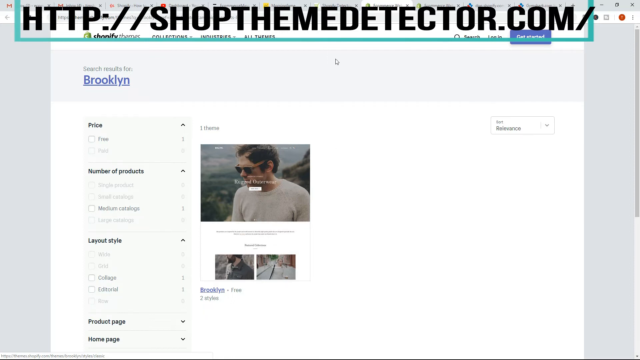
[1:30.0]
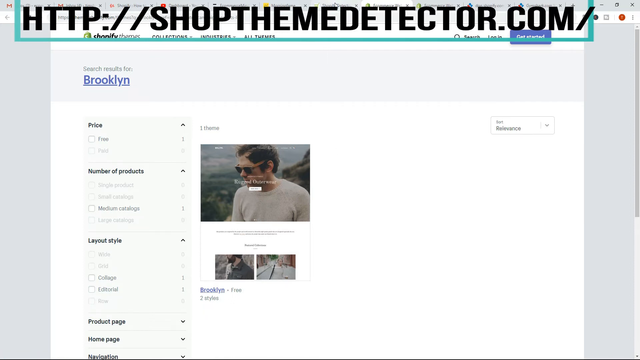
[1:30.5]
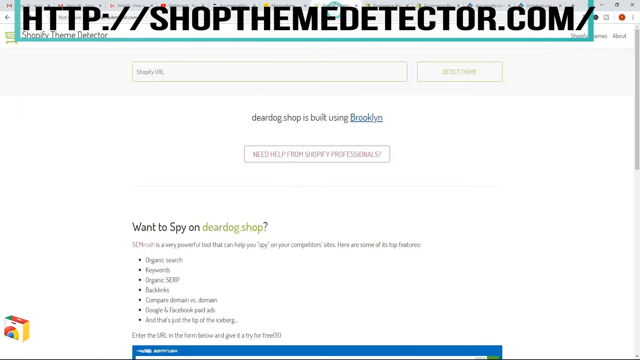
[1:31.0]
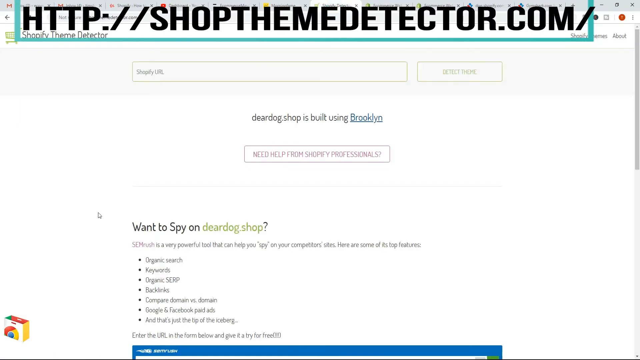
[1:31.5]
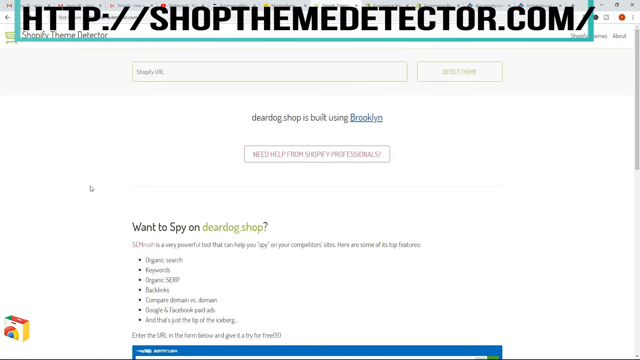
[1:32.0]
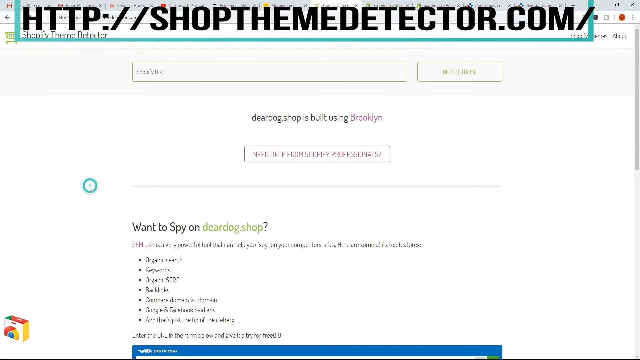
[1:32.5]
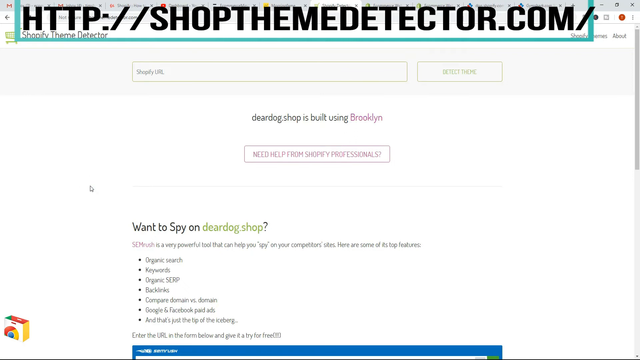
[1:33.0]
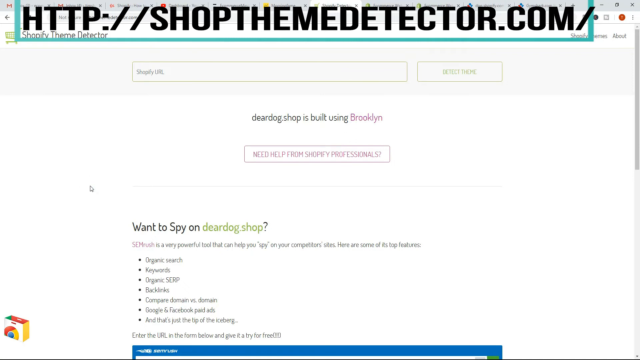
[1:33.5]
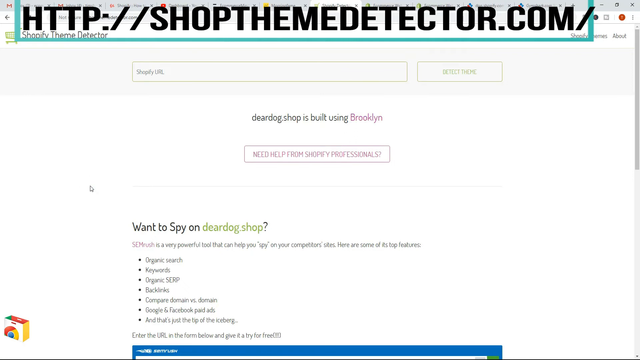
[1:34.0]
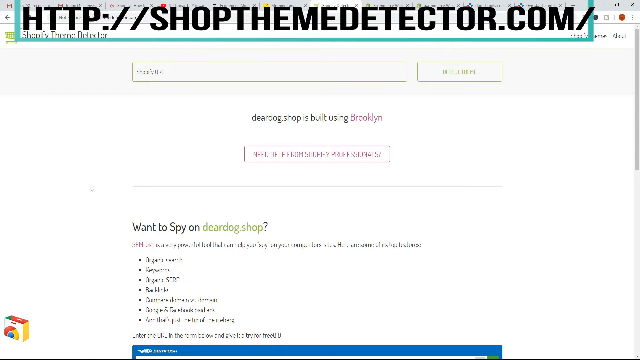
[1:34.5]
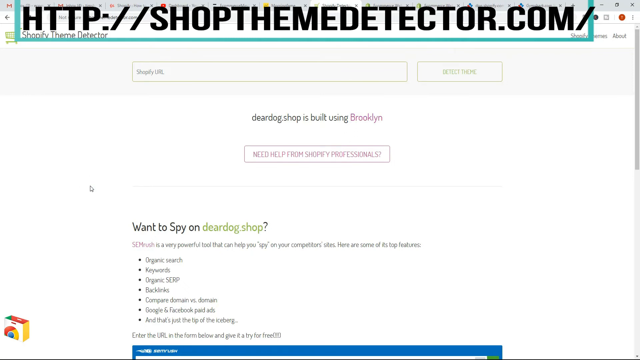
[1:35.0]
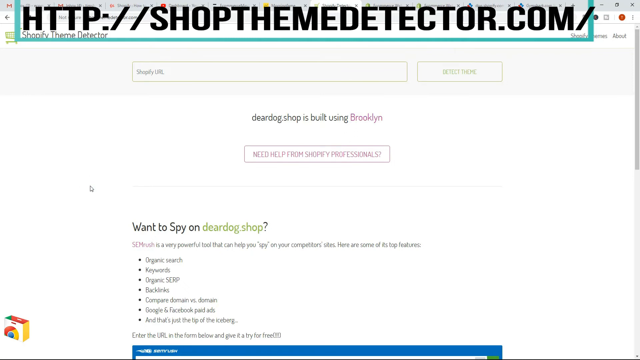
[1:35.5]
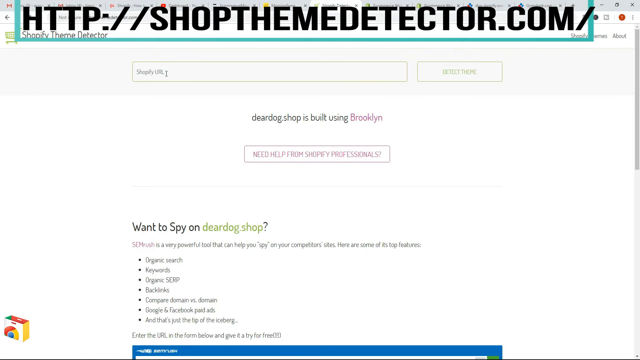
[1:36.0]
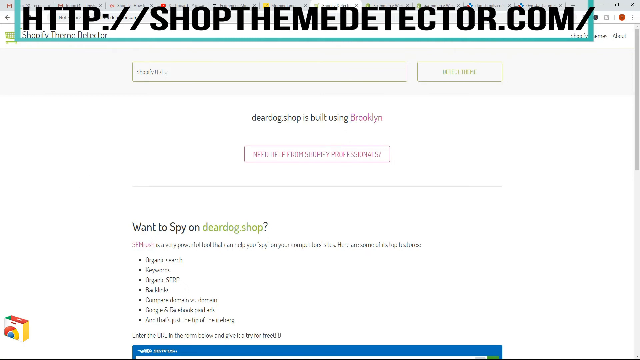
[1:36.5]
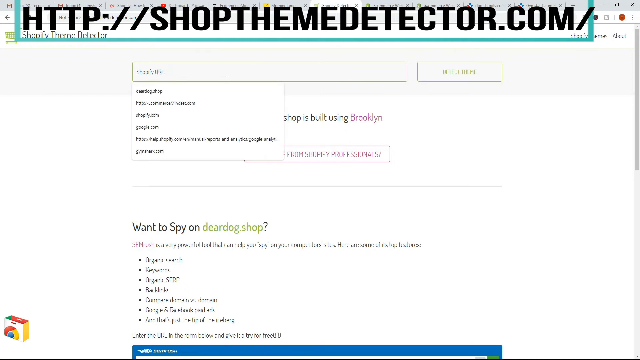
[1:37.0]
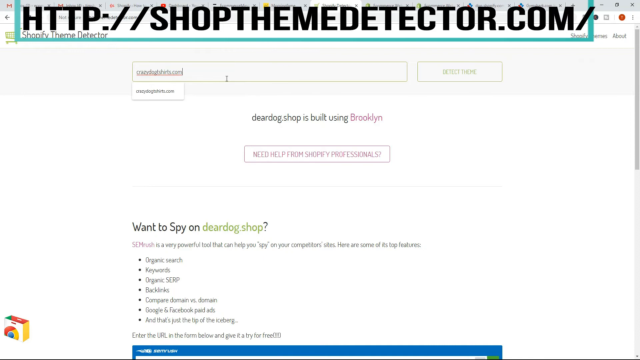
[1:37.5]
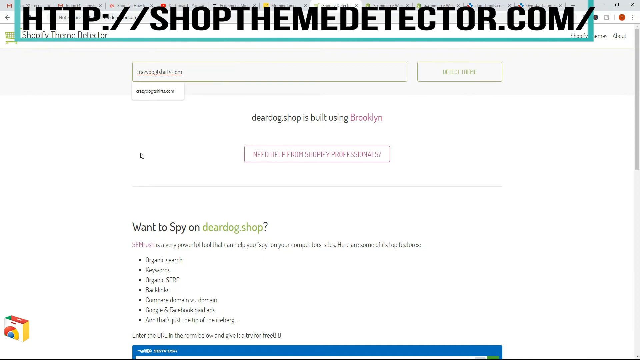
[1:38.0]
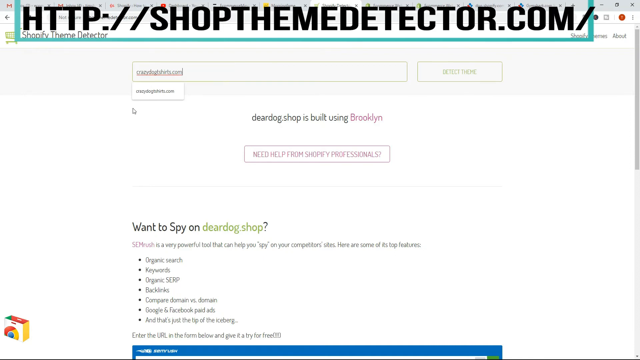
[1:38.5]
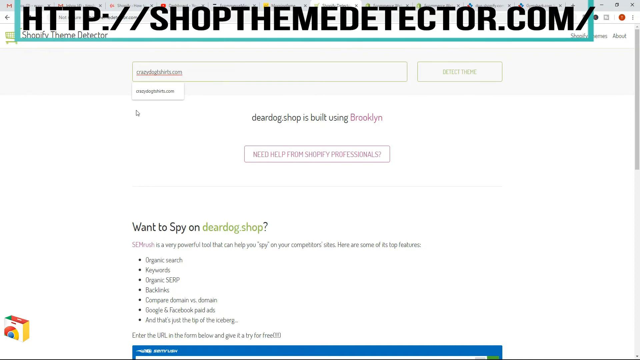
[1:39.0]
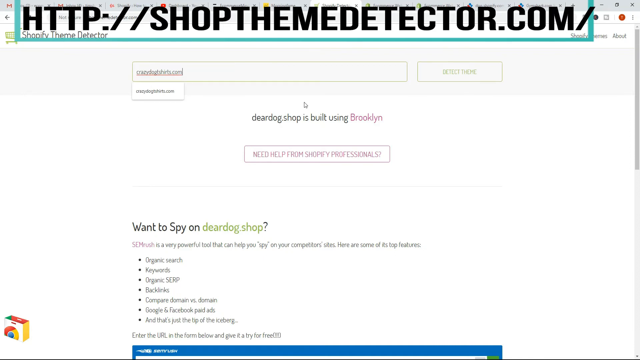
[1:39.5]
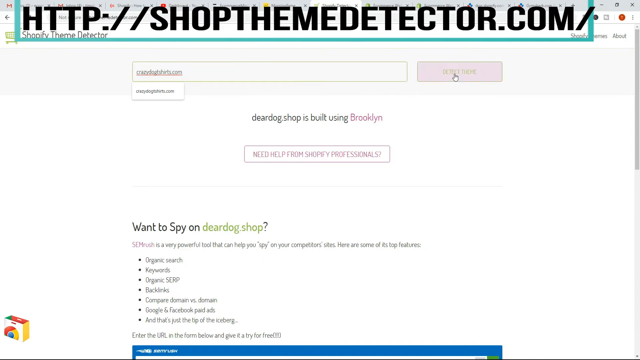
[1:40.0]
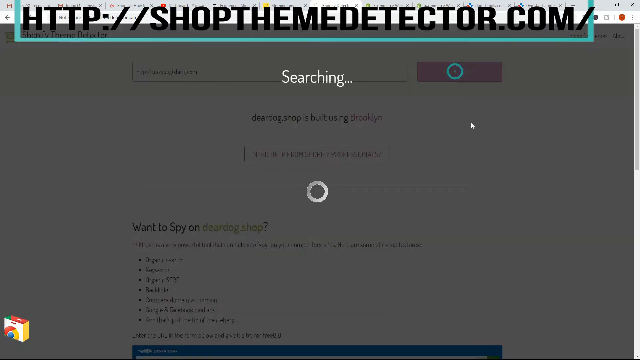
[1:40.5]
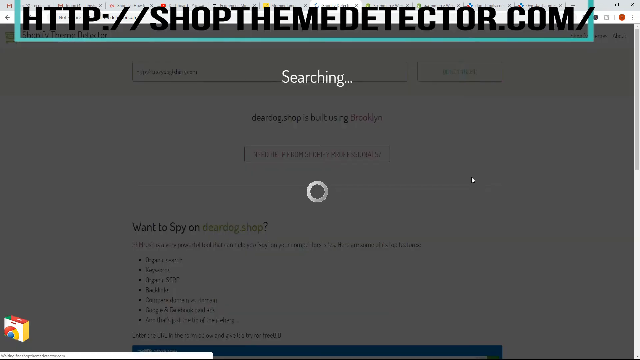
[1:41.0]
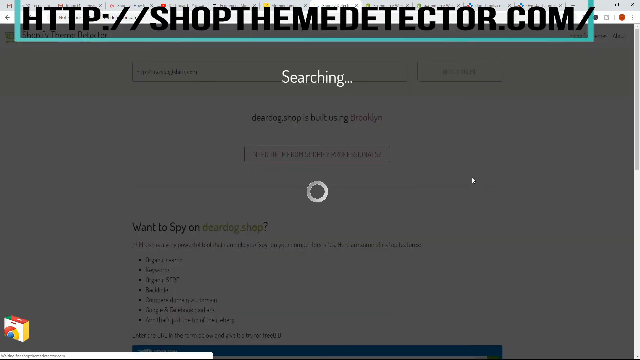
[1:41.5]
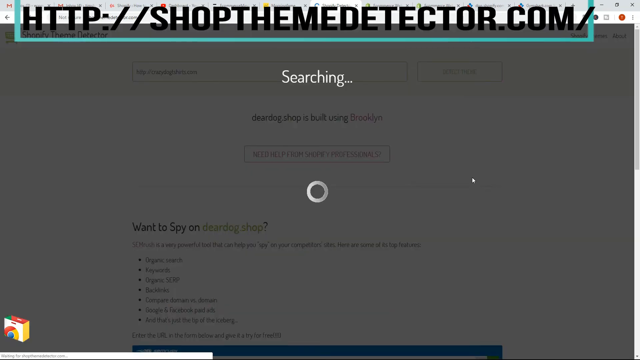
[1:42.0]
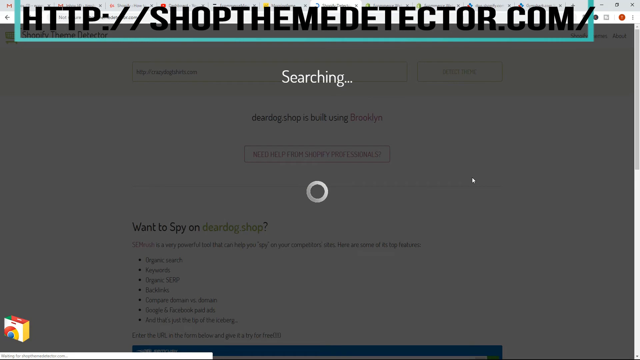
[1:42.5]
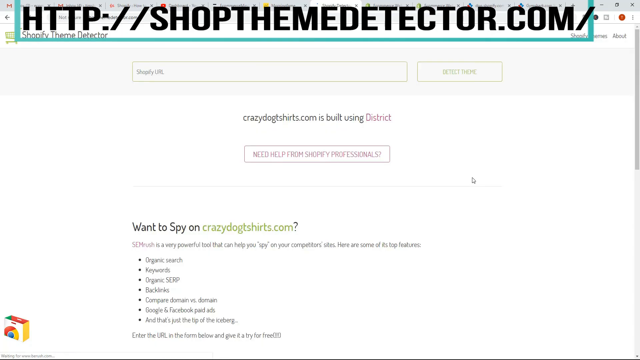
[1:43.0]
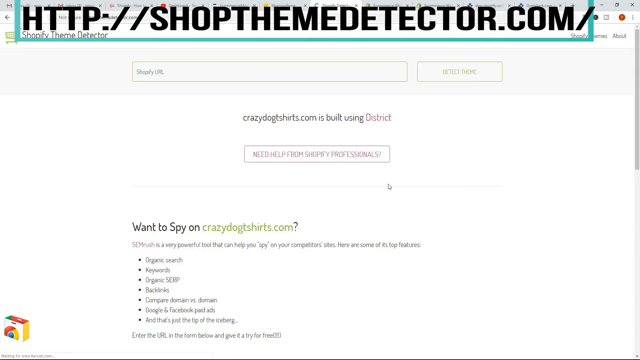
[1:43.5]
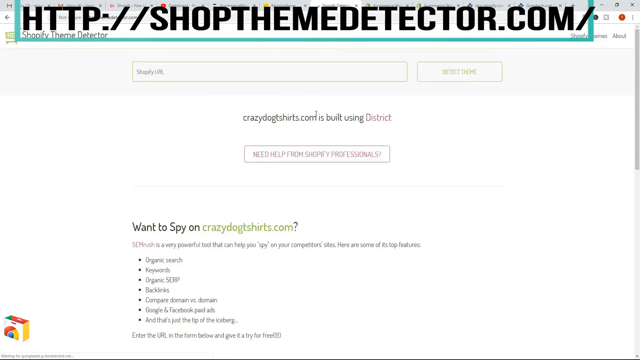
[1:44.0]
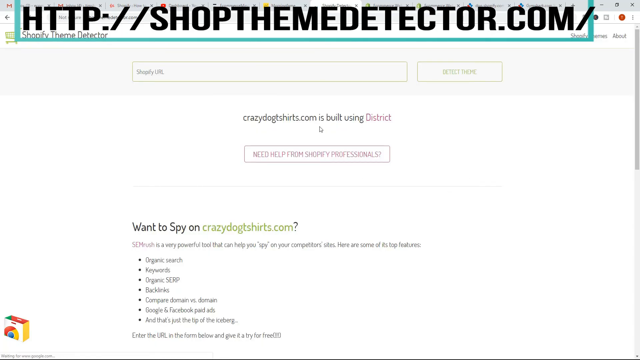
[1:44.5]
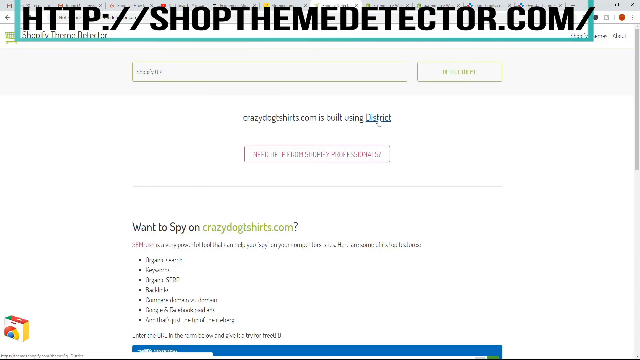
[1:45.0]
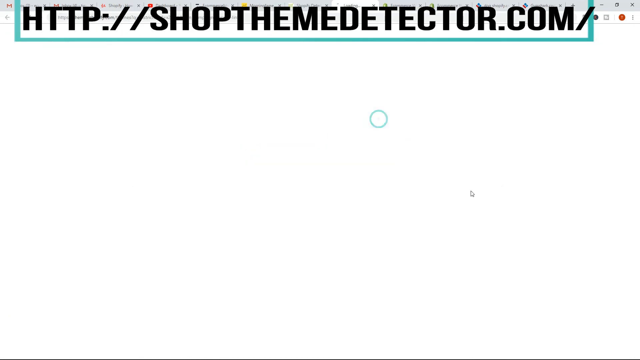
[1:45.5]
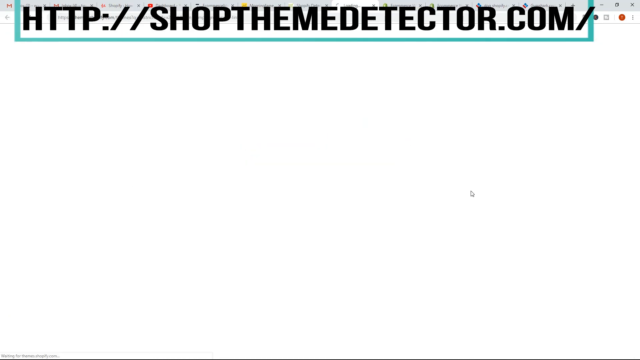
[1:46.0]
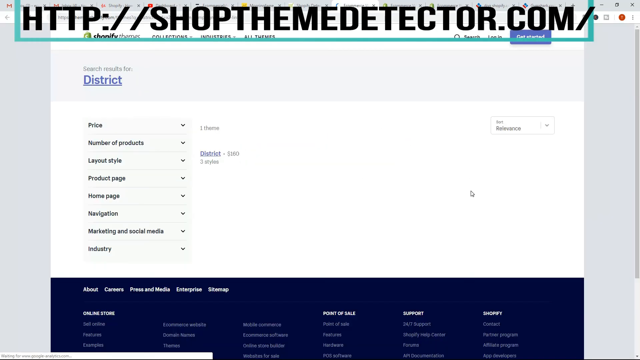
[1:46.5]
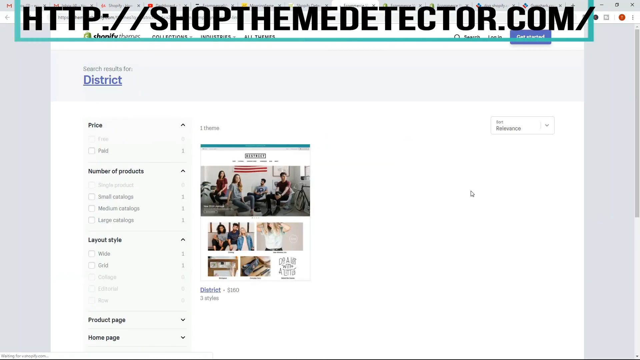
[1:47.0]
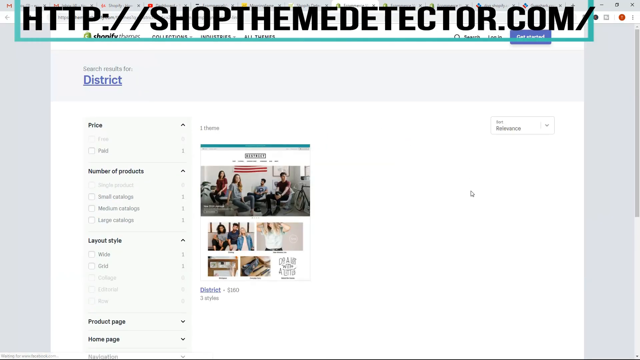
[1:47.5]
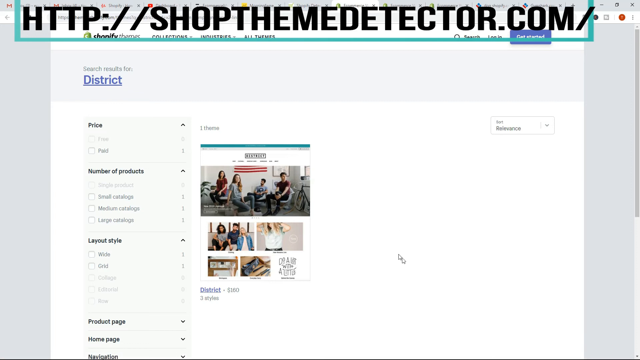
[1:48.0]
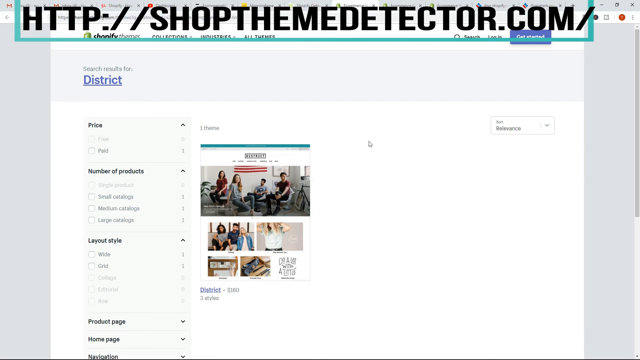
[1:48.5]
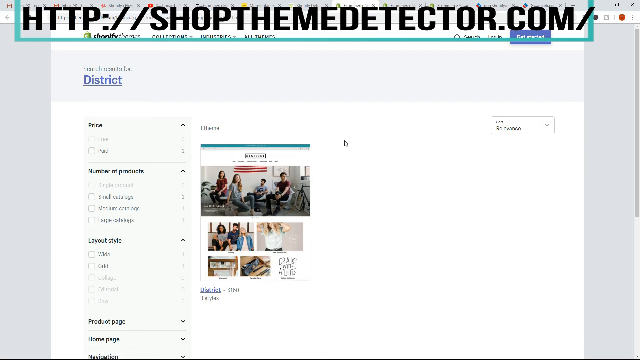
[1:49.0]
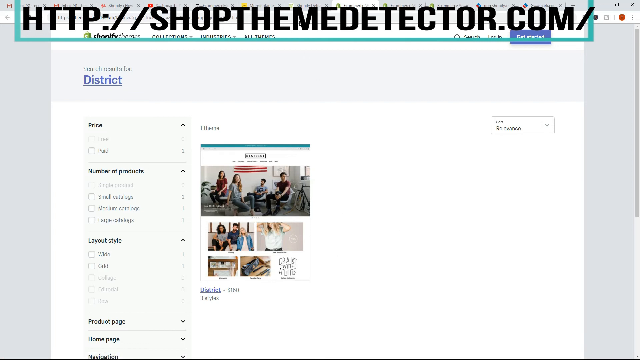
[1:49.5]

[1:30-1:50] The search results for Brooklyn are still shown, and then the search term is changed: a new name is typed in under the shop theme section, and the results for district are shown.